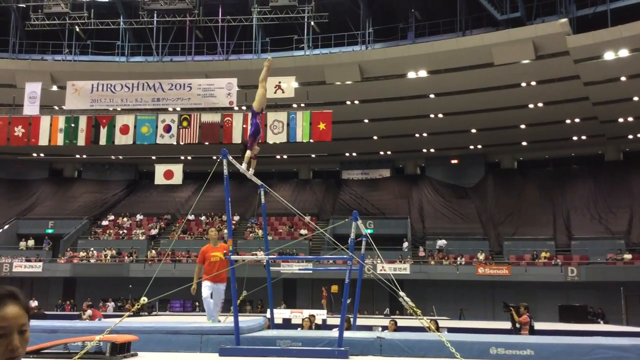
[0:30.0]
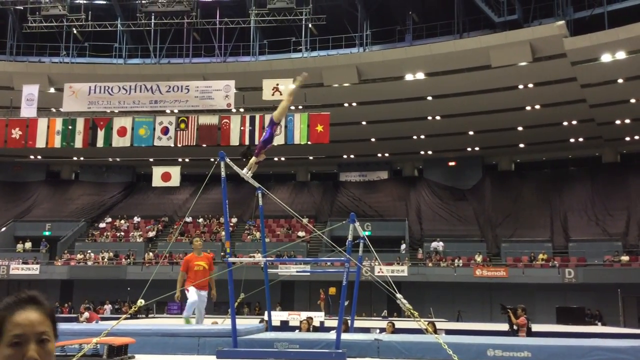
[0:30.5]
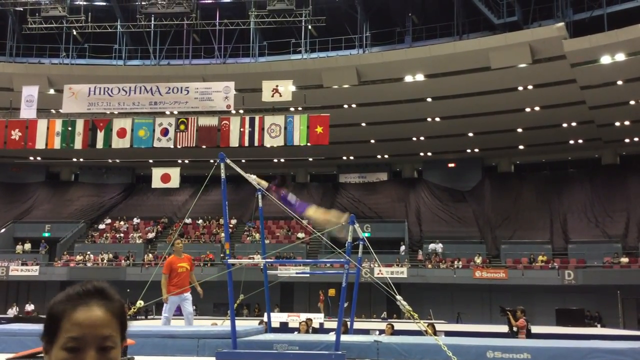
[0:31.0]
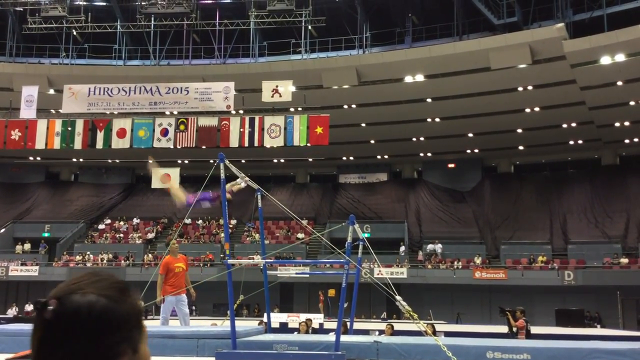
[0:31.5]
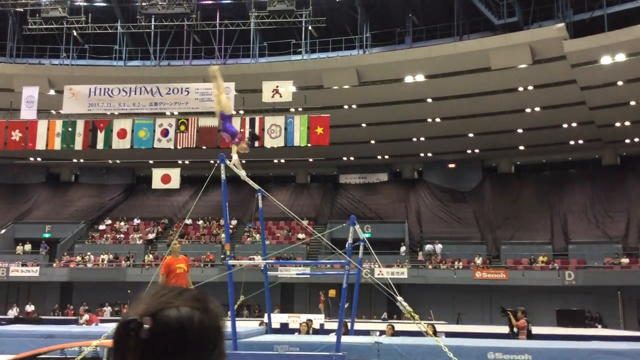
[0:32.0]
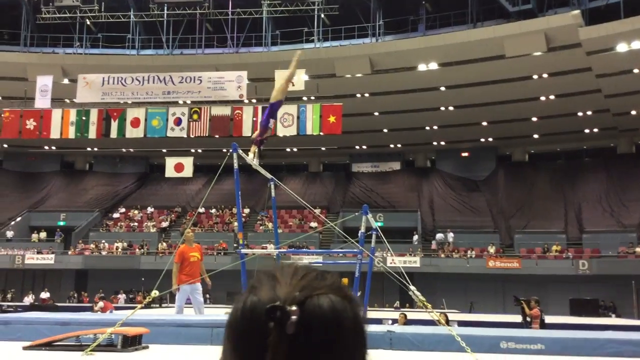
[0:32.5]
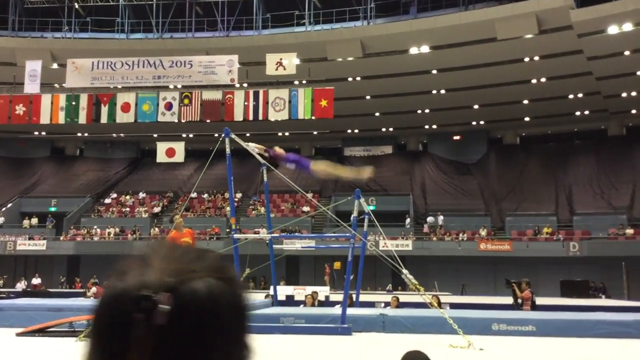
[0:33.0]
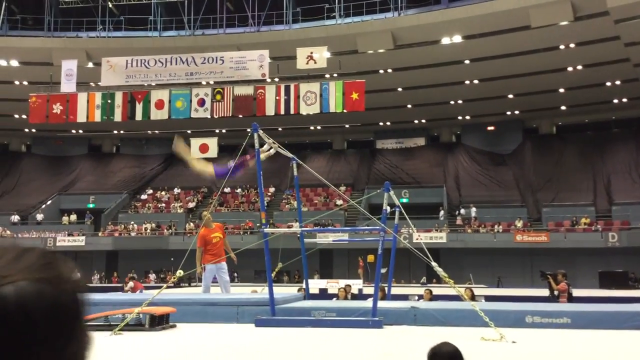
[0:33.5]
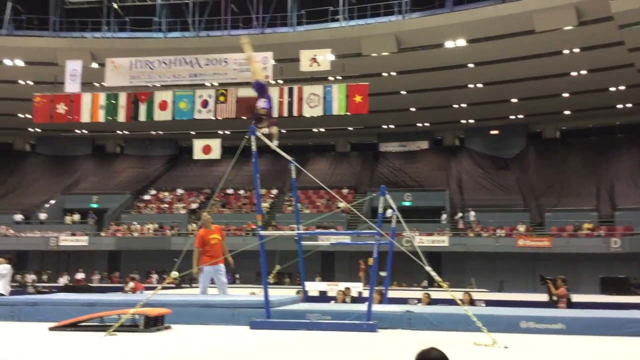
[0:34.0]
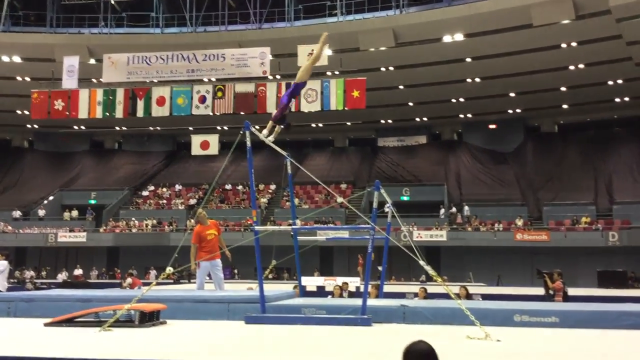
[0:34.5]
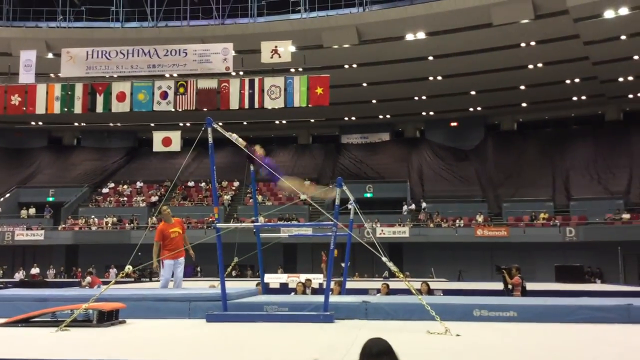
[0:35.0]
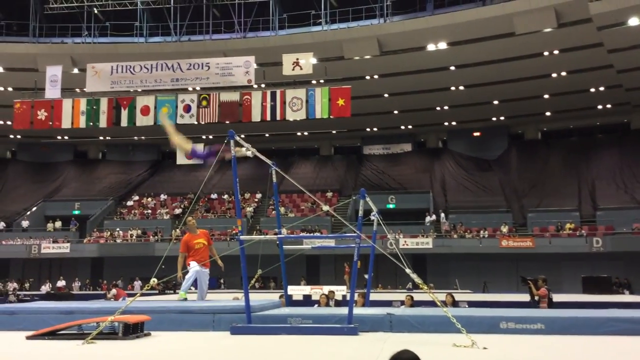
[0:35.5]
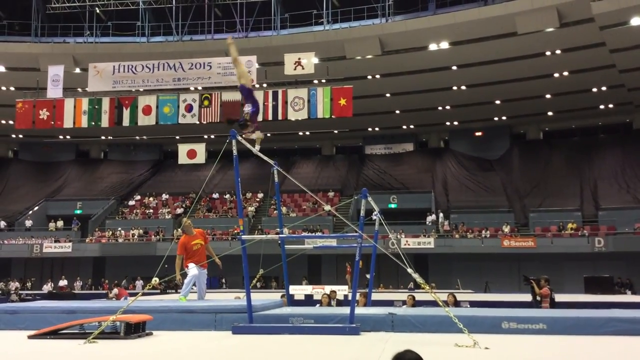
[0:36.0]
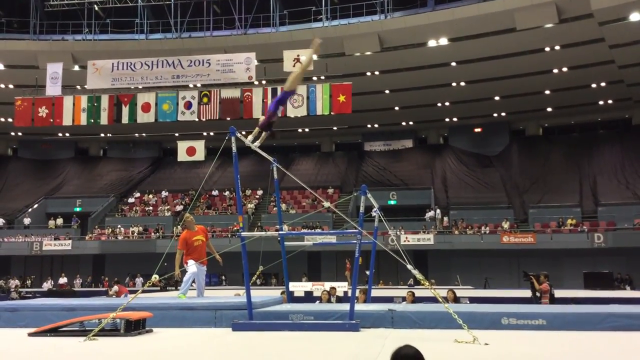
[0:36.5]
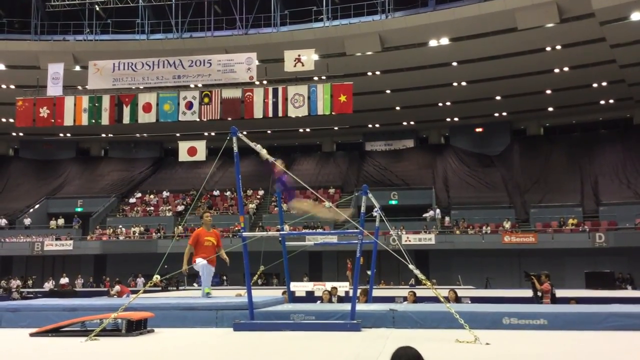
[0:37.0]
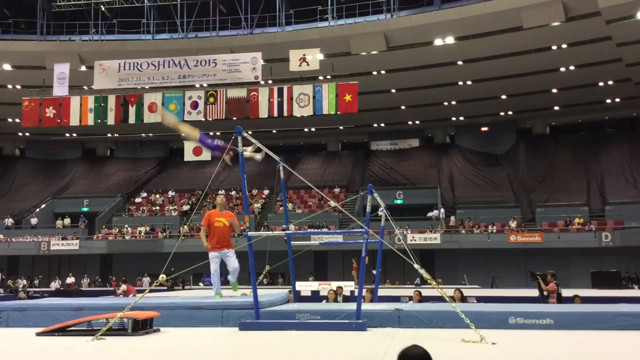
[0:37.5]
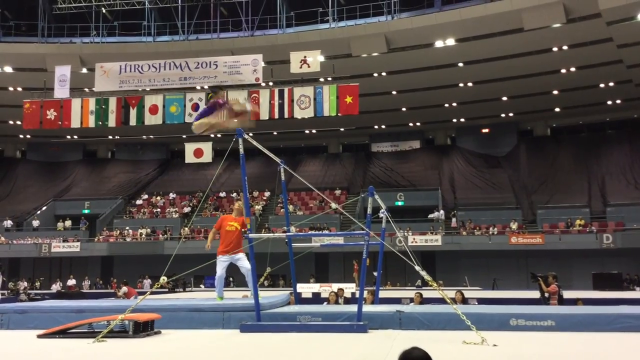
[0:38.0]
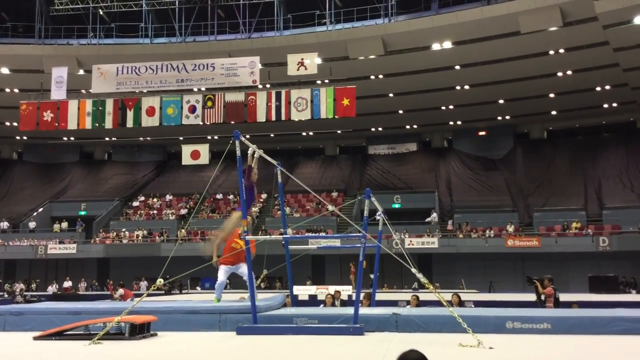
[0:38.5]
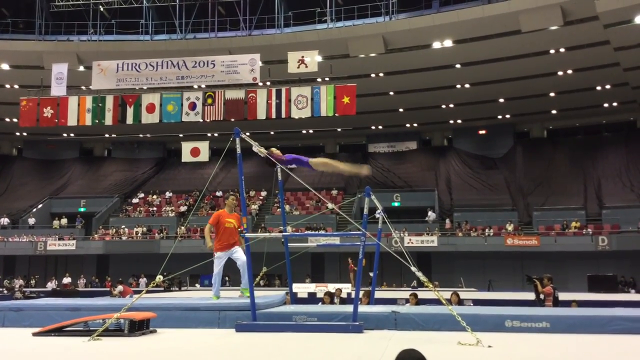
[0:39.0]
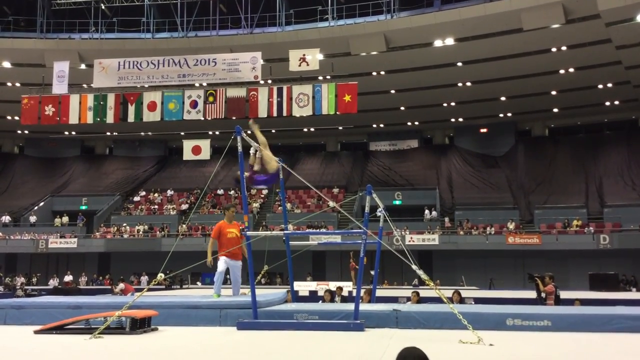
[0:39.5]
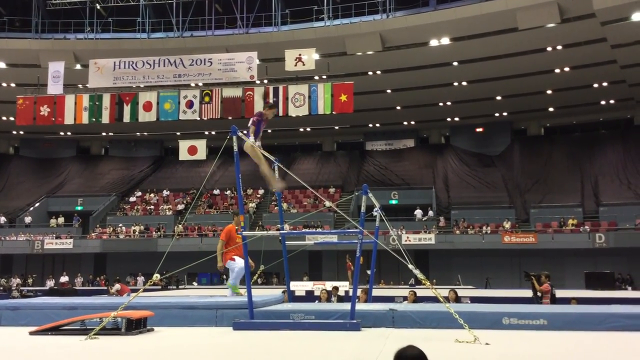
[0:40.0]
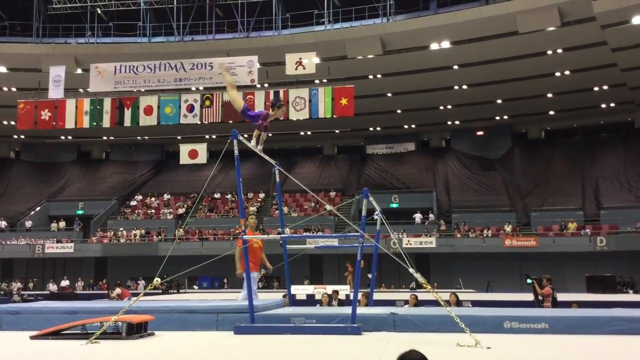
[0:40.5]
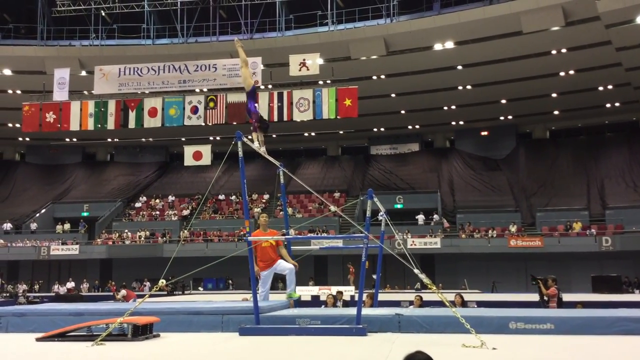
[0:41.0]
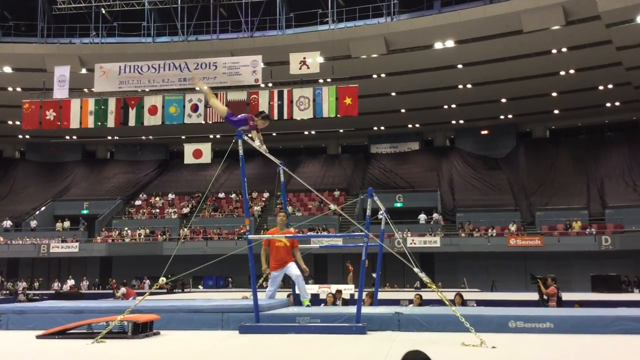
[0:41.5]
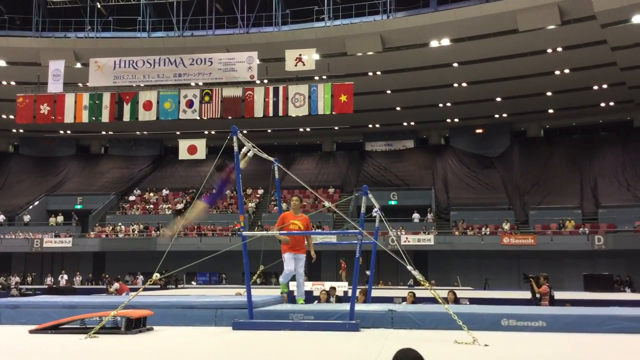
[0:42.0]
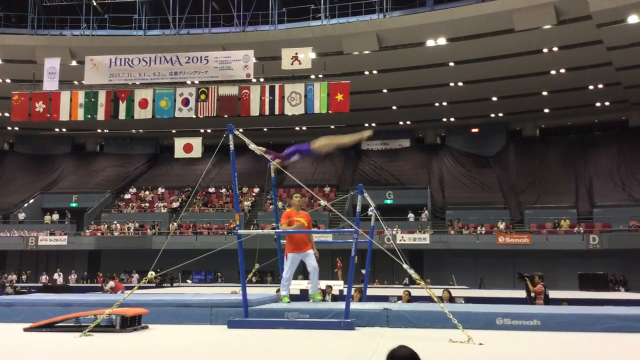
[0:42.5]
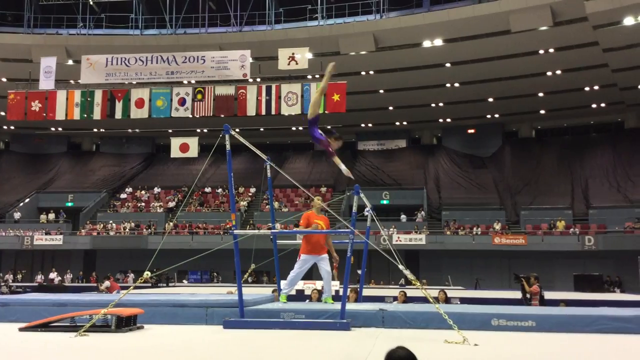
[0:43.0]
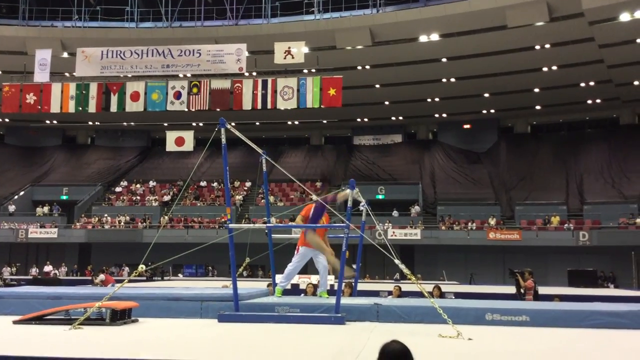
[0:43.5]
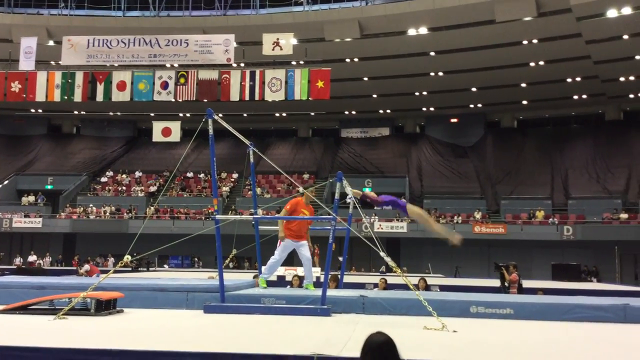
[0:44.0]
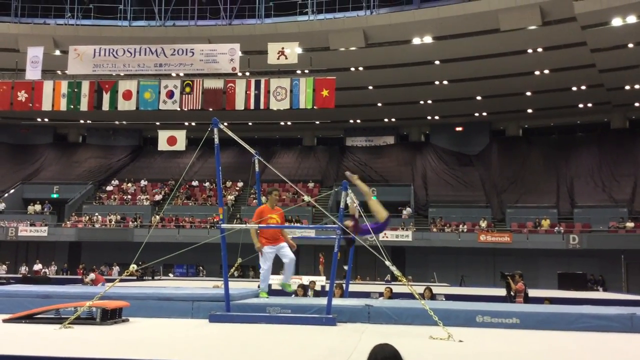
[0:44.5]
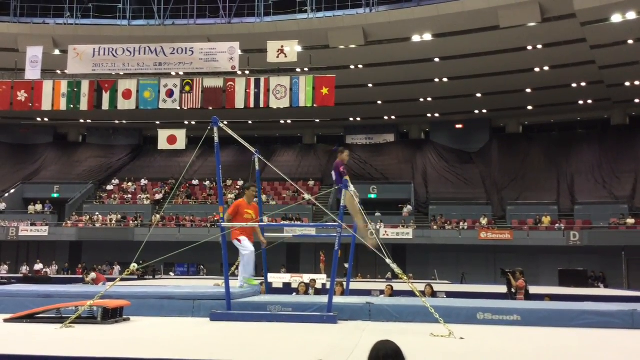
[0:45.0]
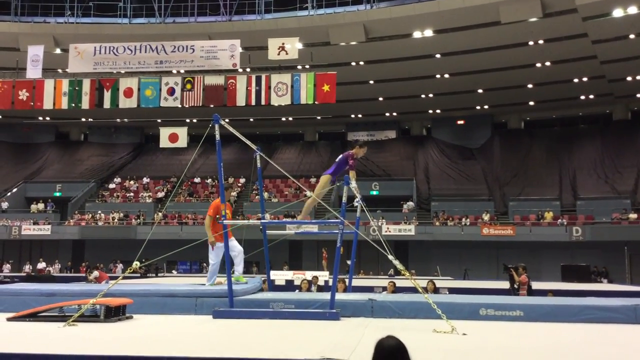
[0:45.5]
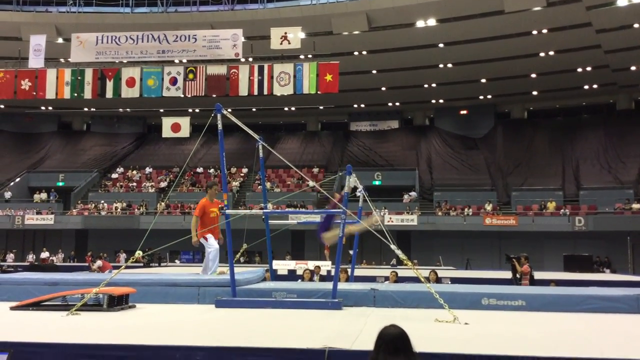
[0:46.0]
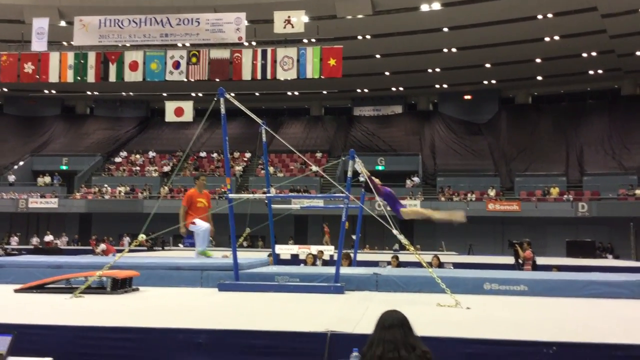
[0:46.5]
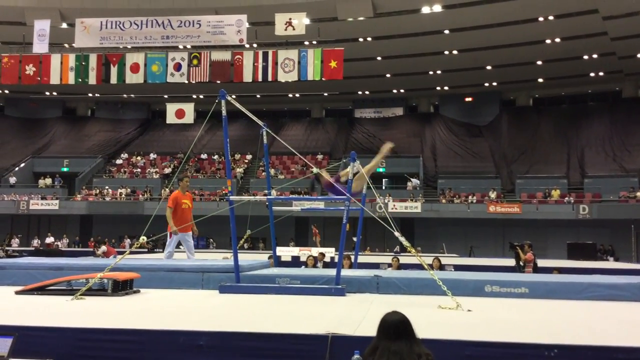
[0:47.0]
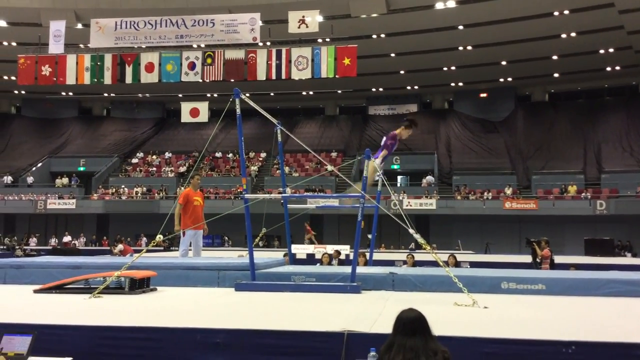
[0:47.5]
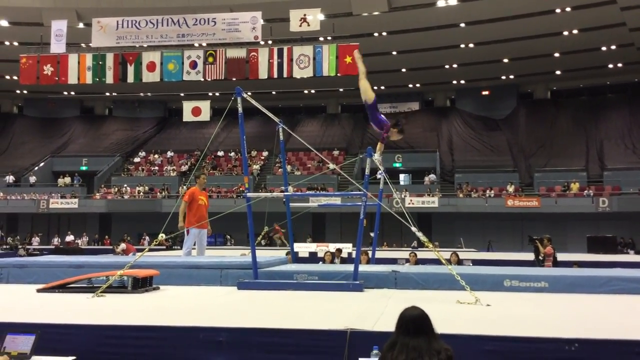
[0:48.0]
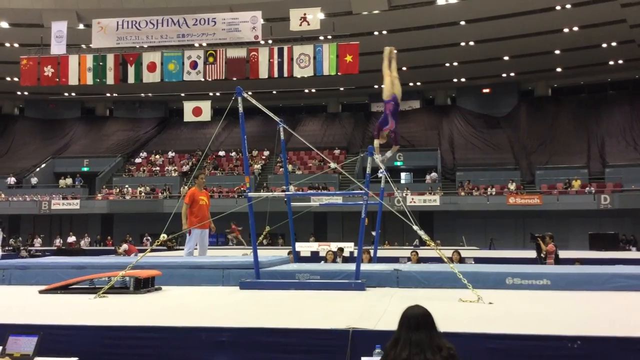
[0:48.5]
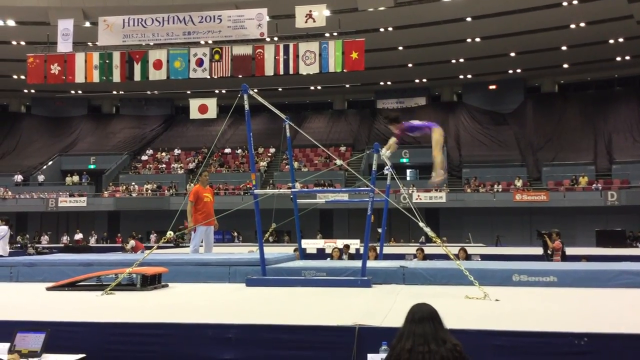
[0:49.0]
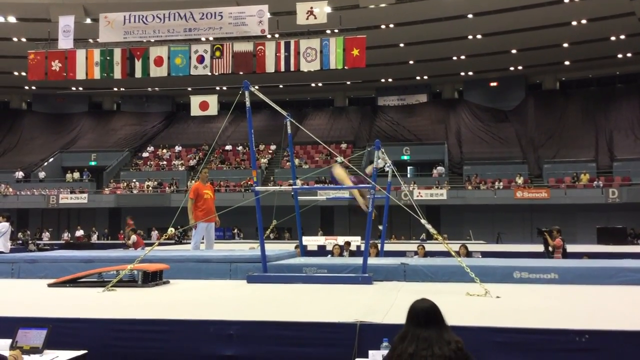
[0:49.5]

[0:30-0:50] A performance is going on in a very large gymnastics gymnasium. A girl on the uneven bars does flips and twists, then sort of spins in the air and hops onto the lower beam. In the middle section the bars are blue, with ropes put down to help balance the whole area for safety. The bar gives in just a little bit as she goes around spinning and twisting. She does a graceful flip and then catches the bar again with her hands as she comes down. In the background a coach wearing what looks like a red t-shirt and gray jogging pants watches and spots her for protection.